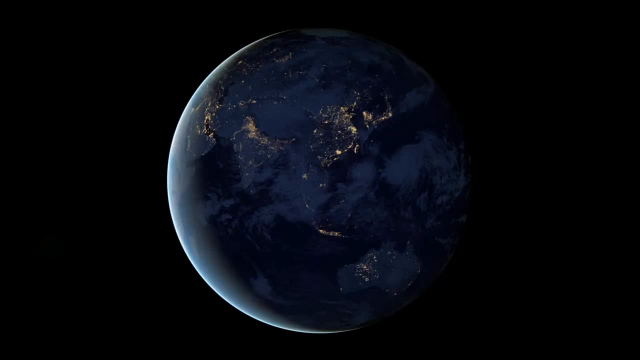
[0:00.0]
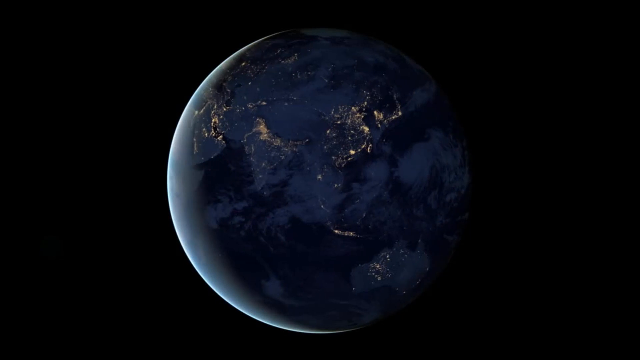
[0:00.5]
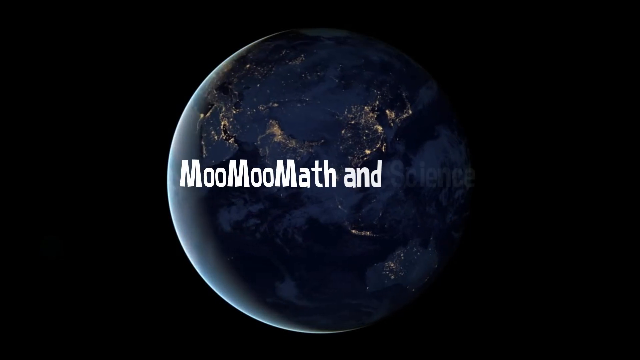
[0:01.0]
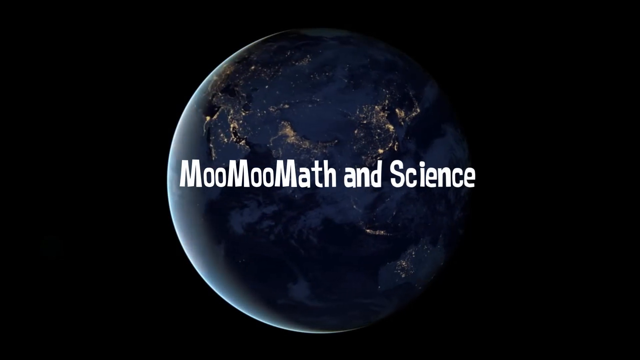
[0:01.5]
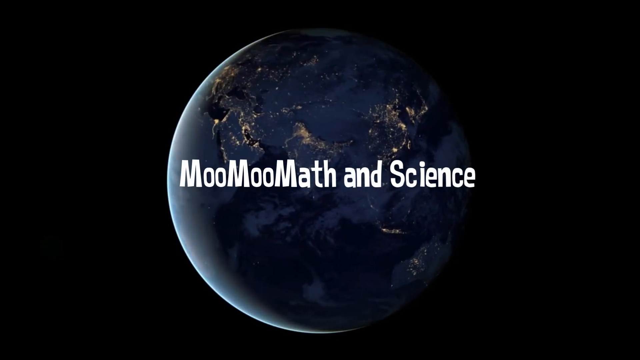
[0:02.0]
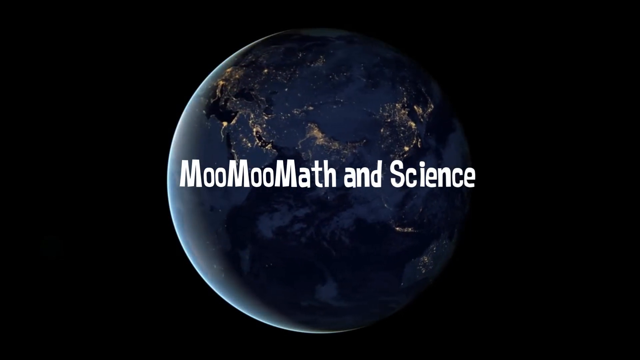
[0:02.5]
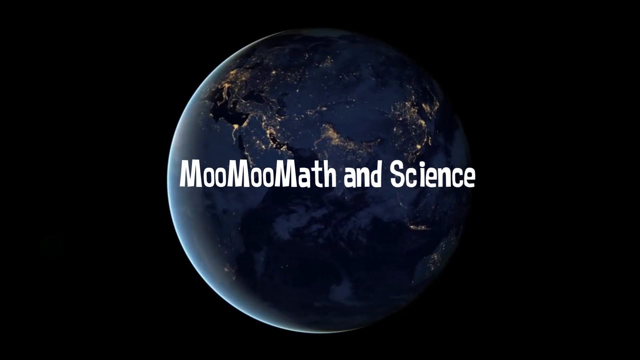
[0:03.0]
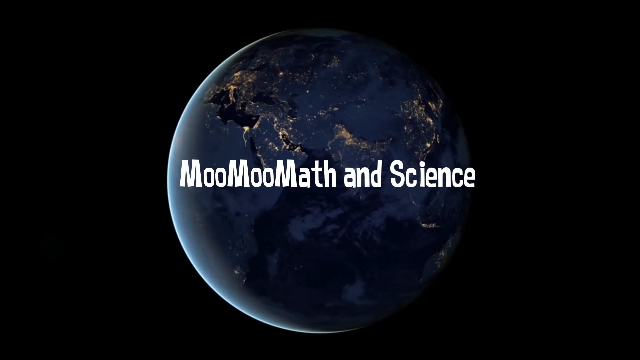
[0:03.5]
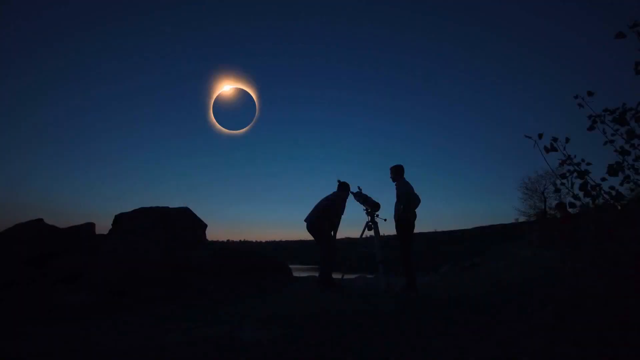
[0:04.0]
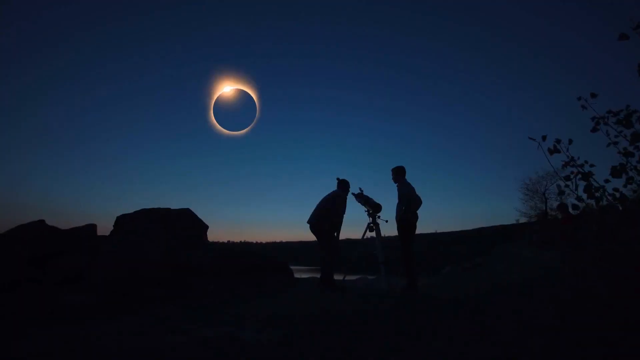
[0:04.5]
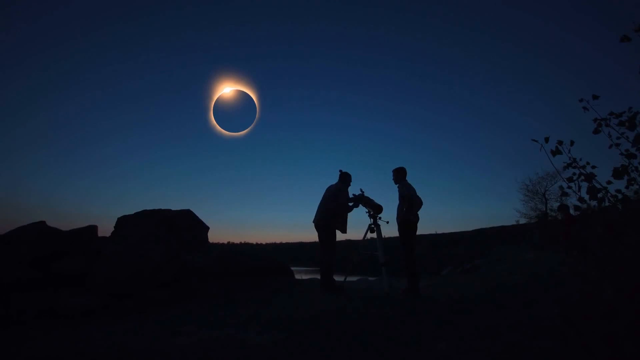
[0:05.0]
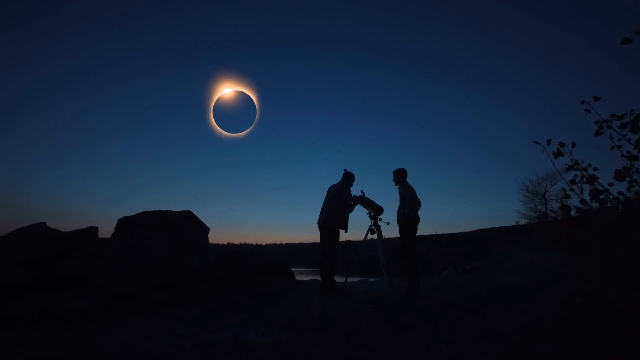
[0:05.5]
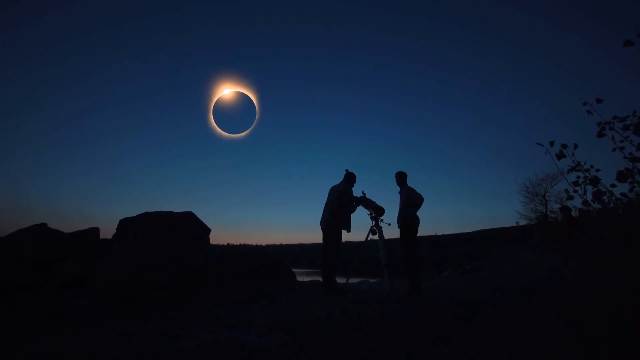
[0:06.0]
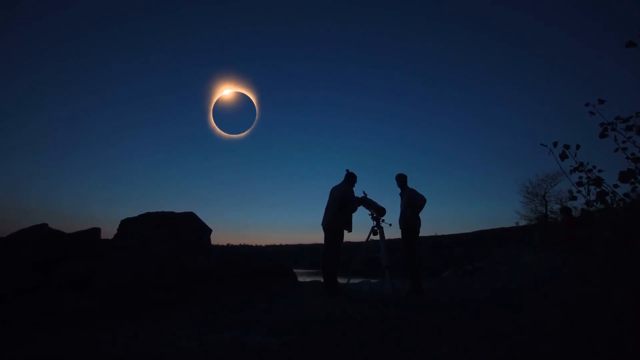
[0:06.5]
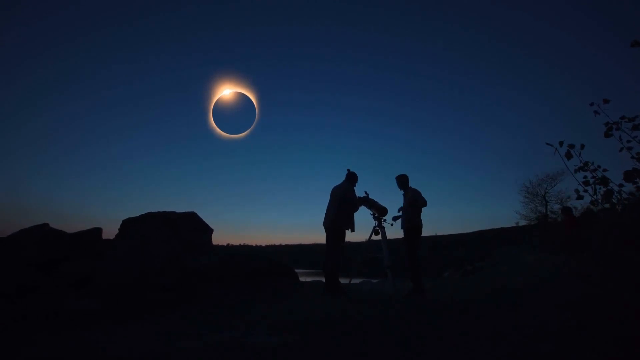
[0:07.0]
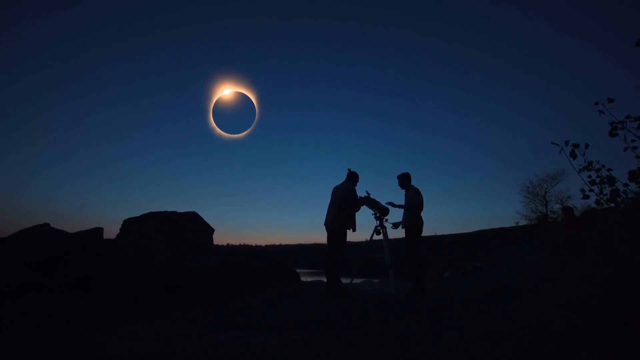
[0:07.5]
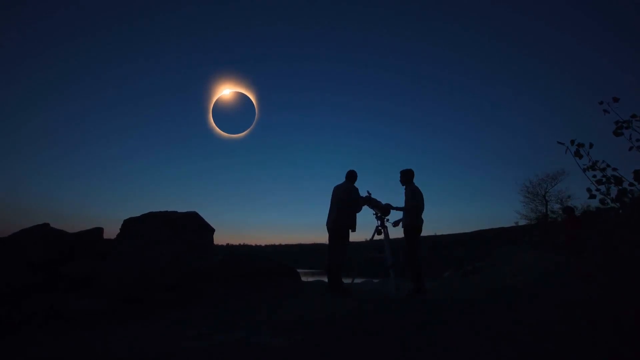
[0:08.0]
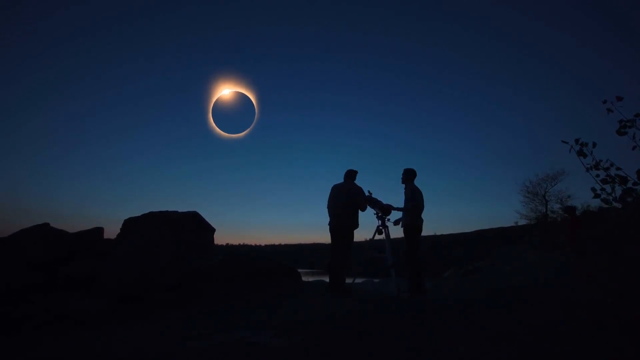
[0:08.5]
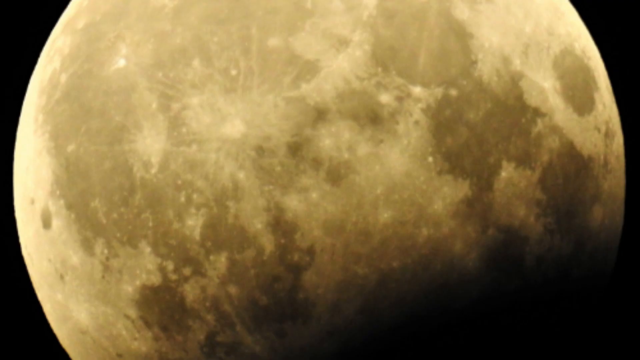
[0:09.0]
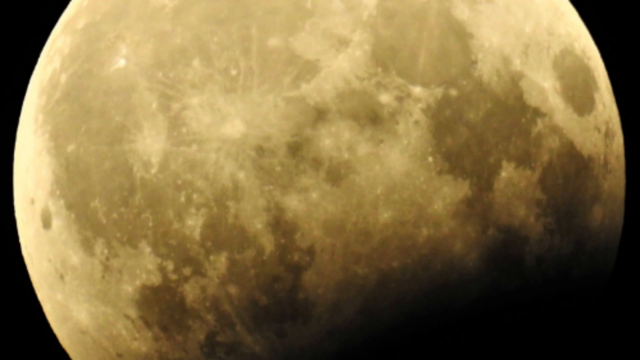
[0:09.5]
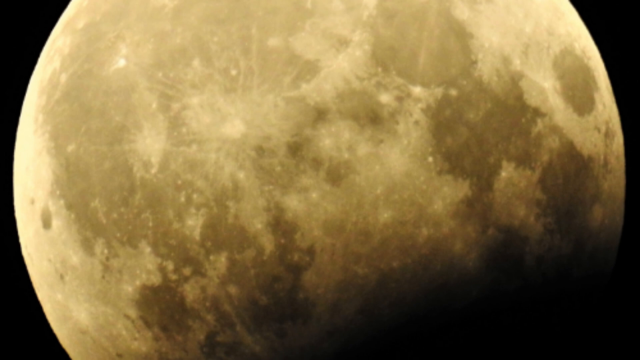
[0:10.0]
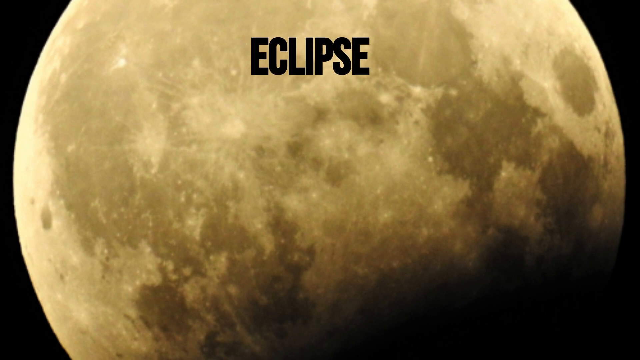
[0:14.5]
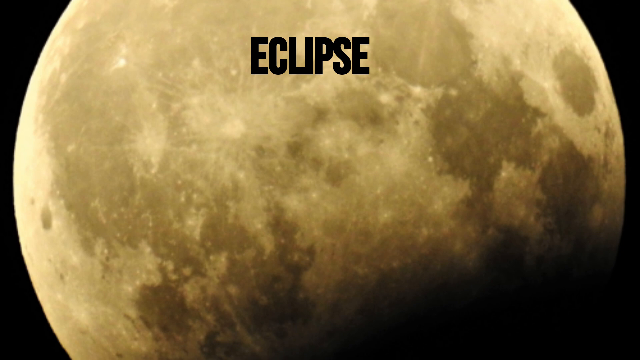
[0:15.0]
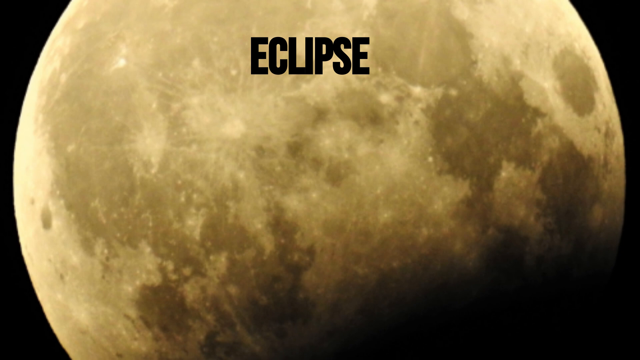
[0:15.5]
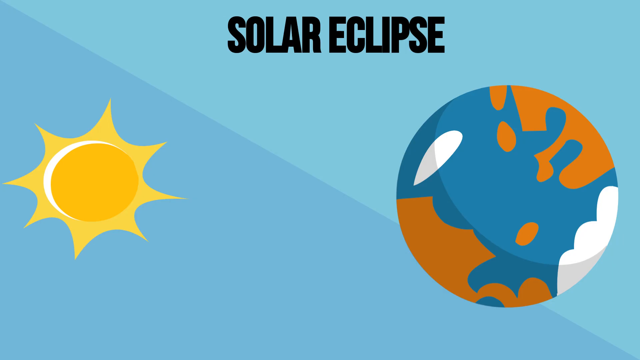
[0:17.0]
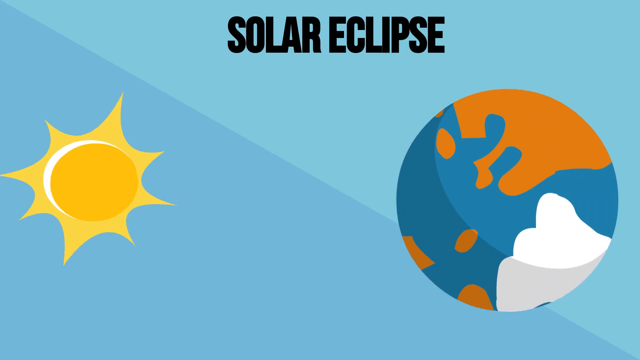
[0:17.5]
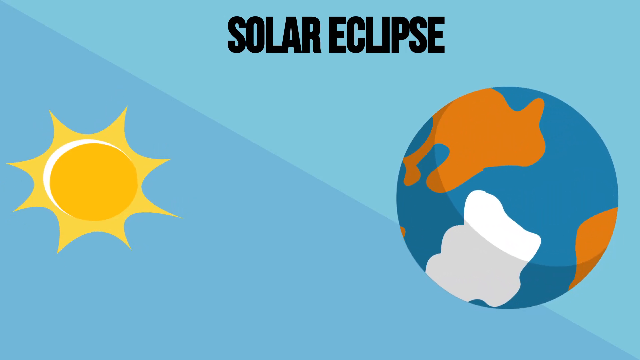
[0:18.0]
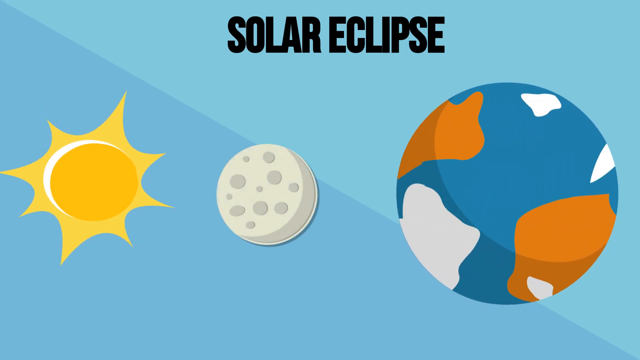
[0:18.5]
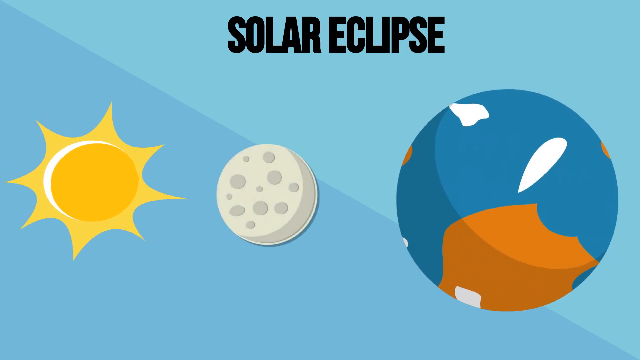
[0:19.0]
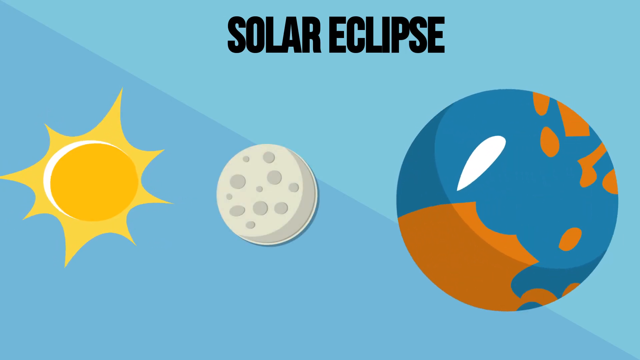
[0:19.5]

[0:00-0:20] The video begins with a view of the Earth from outer space at night, with lights visible on parts of the continents. The name Moo Moo Math and Science appears. Next comes a picture of a solar eclipse, with the sun around the moon, and the outlines of two figures about to look through a telescope. A close-up picture of the whitish-yellow moon follows, with dark places visible on it. The word "eclipse" then appears in bold black letters, followed by "solar eclipse." A cartoon rendition shows the sun, with the moon in between, and the Earth spinning on its axis.